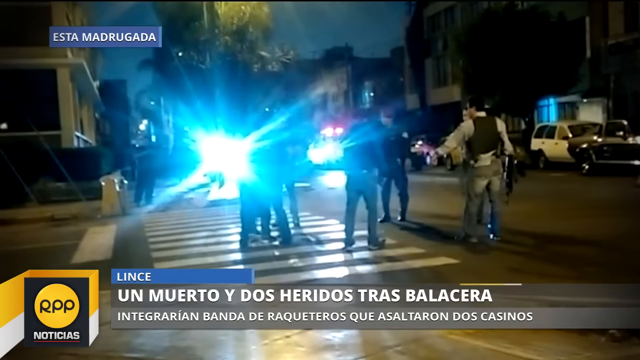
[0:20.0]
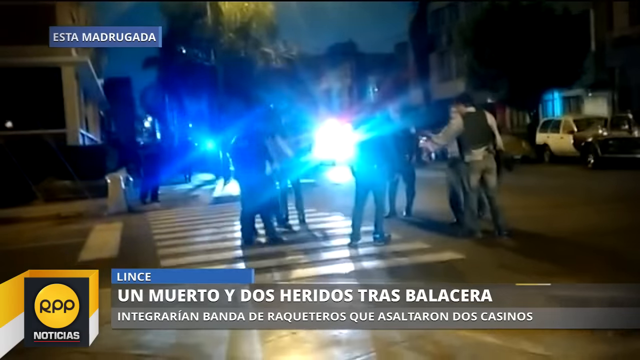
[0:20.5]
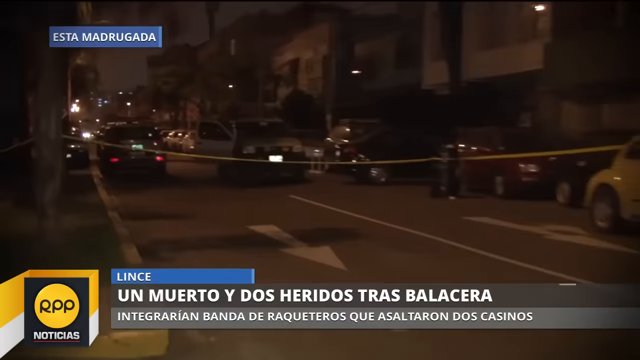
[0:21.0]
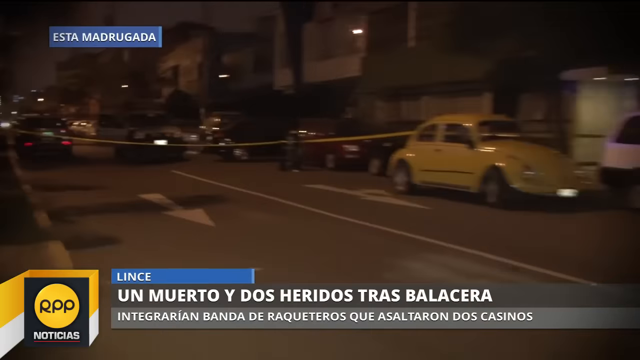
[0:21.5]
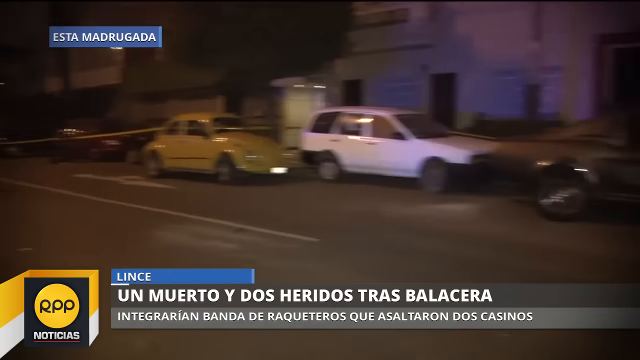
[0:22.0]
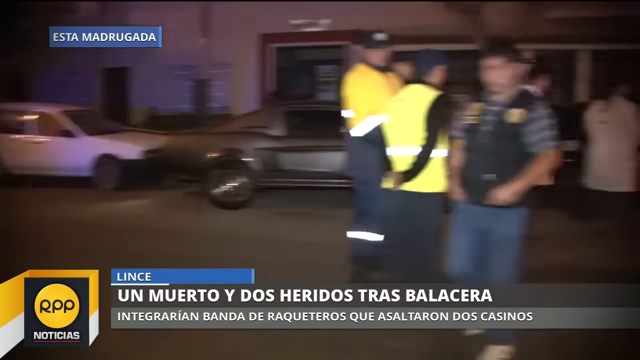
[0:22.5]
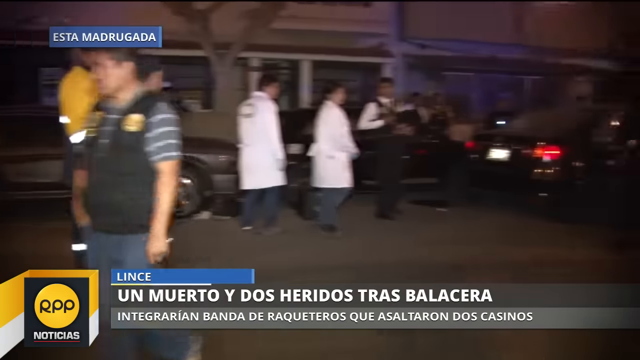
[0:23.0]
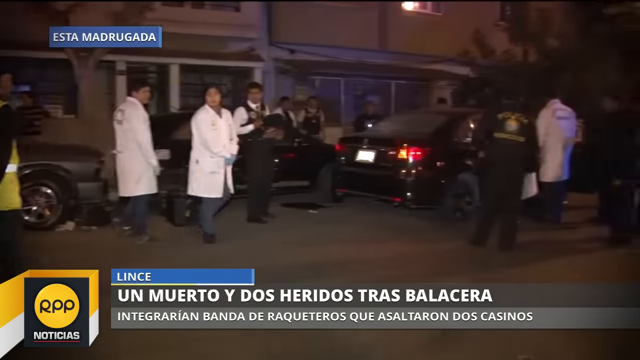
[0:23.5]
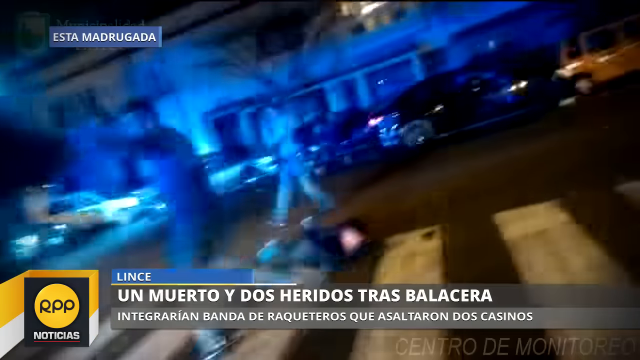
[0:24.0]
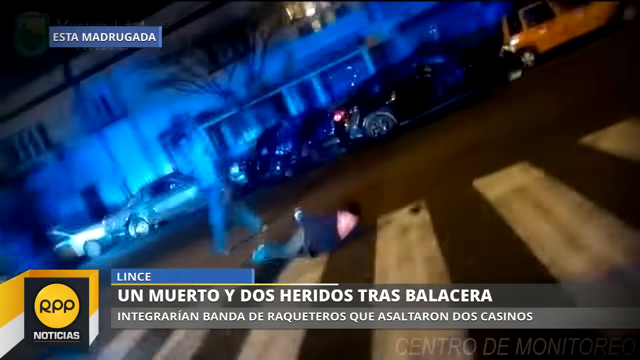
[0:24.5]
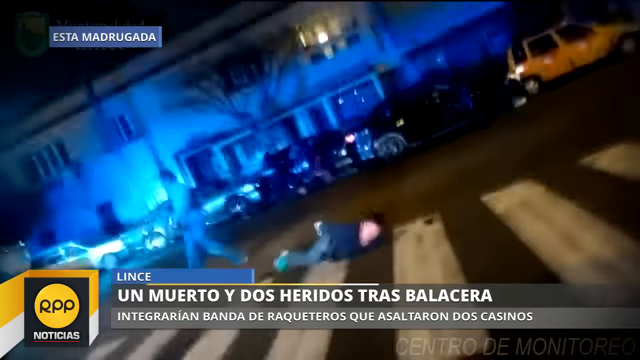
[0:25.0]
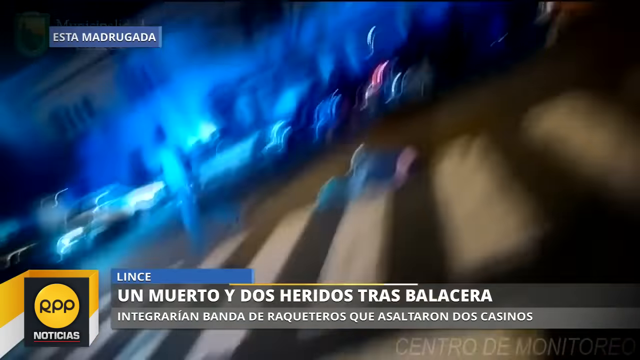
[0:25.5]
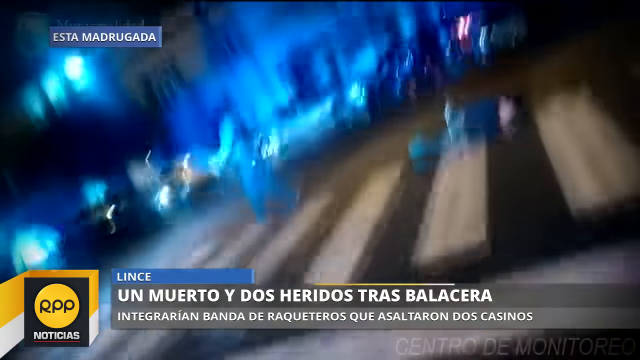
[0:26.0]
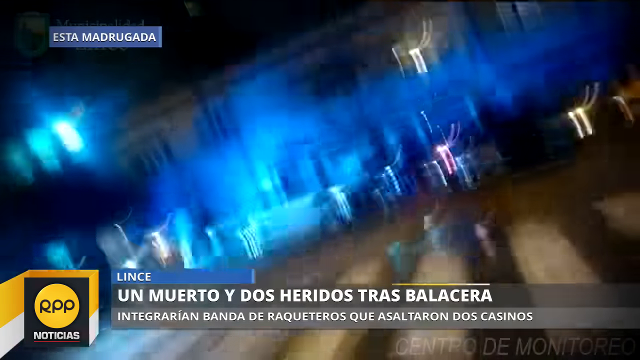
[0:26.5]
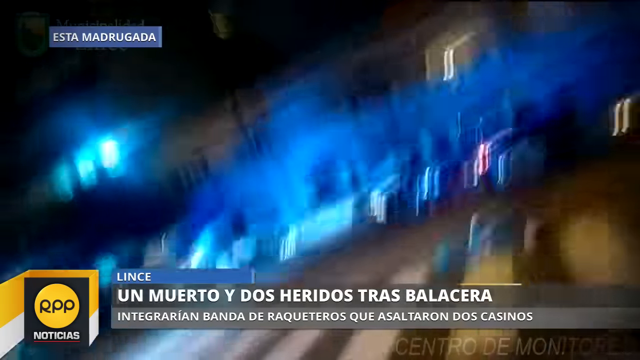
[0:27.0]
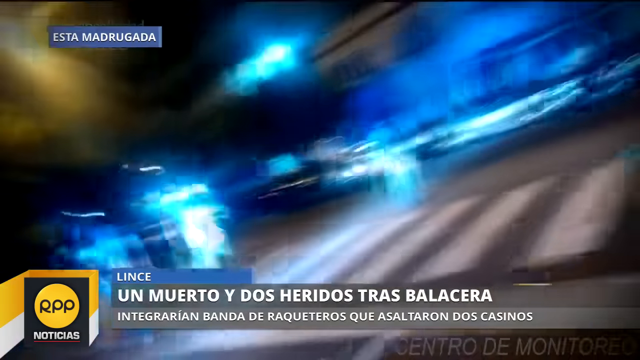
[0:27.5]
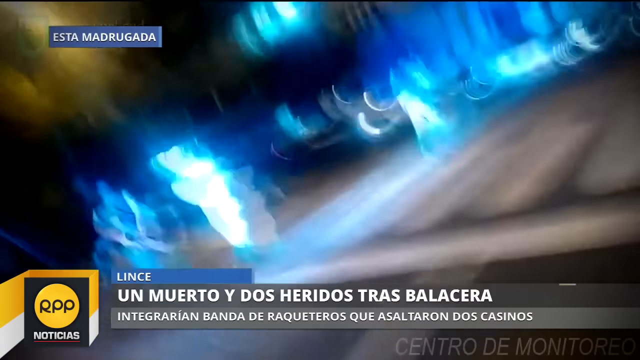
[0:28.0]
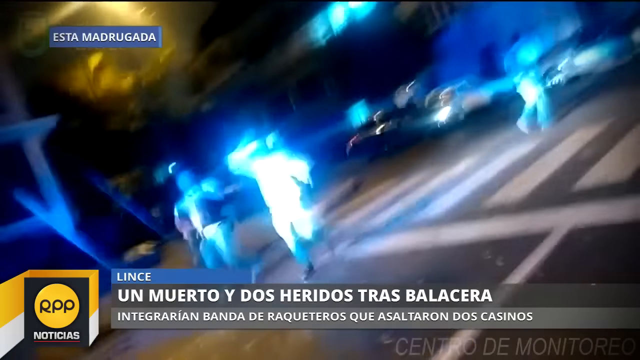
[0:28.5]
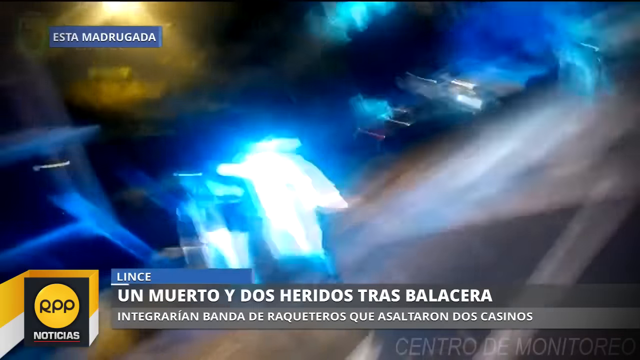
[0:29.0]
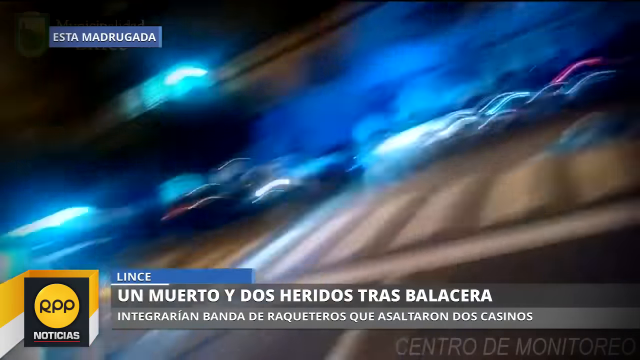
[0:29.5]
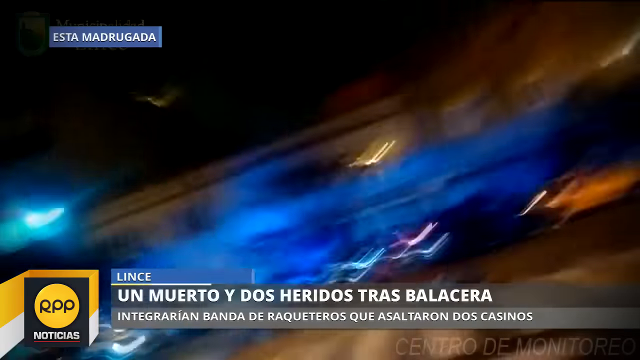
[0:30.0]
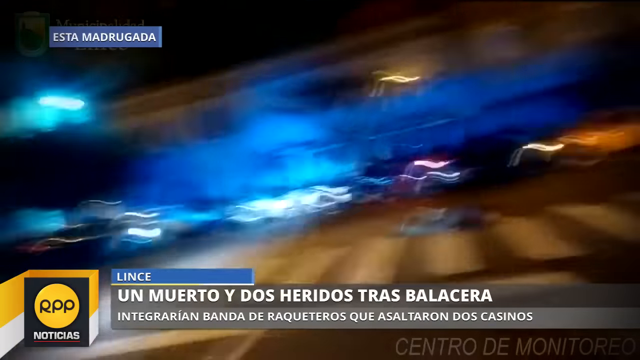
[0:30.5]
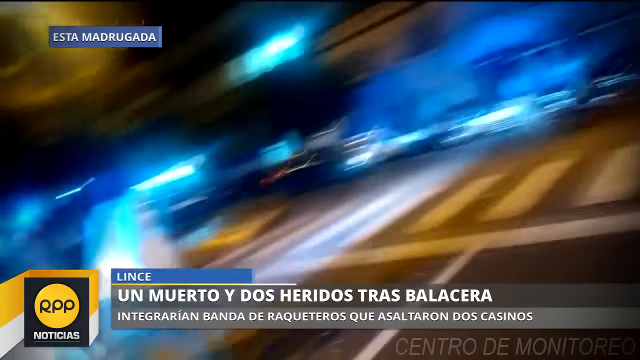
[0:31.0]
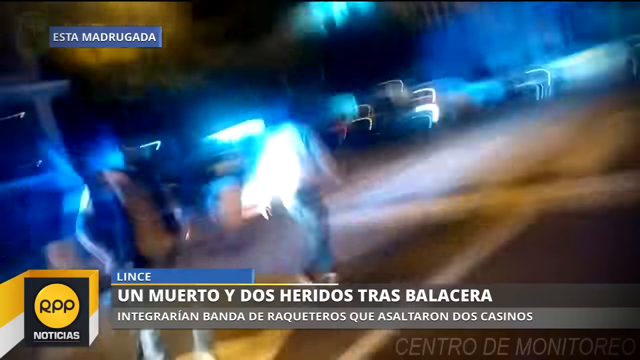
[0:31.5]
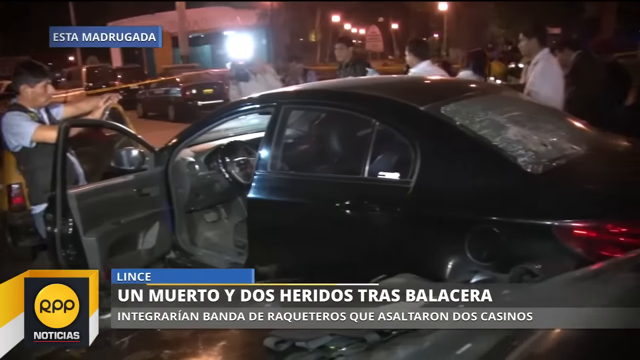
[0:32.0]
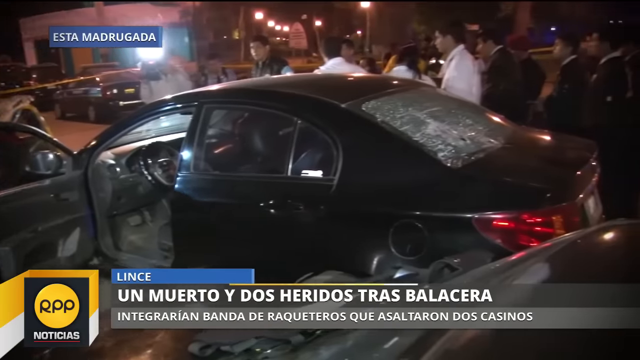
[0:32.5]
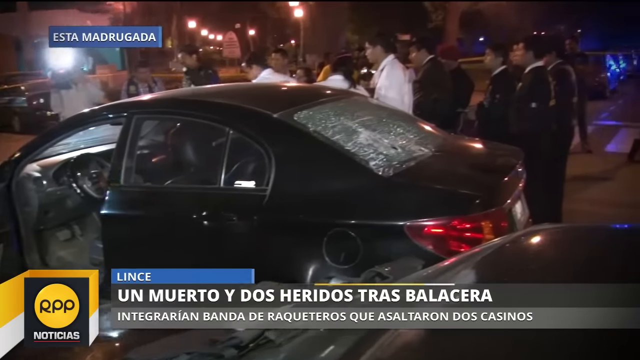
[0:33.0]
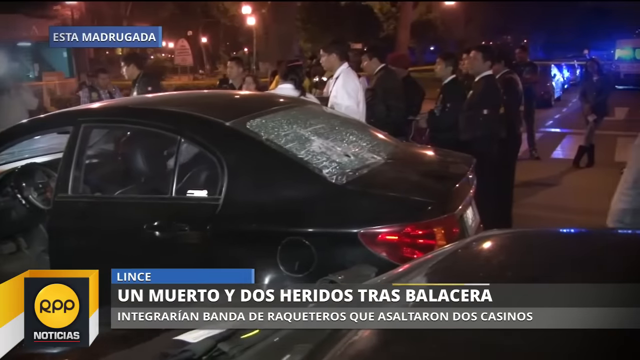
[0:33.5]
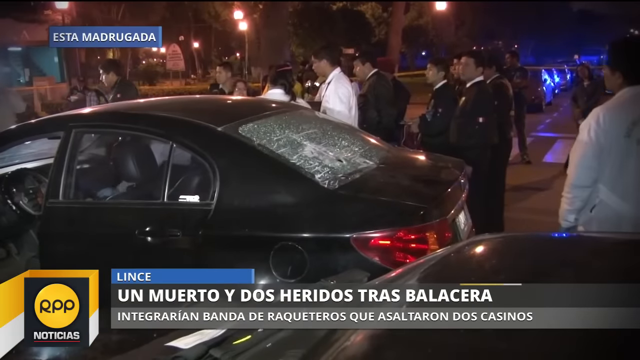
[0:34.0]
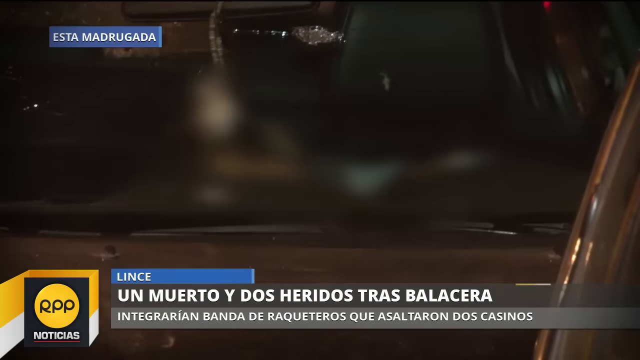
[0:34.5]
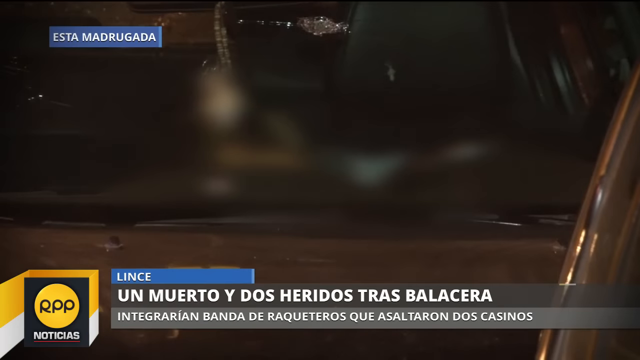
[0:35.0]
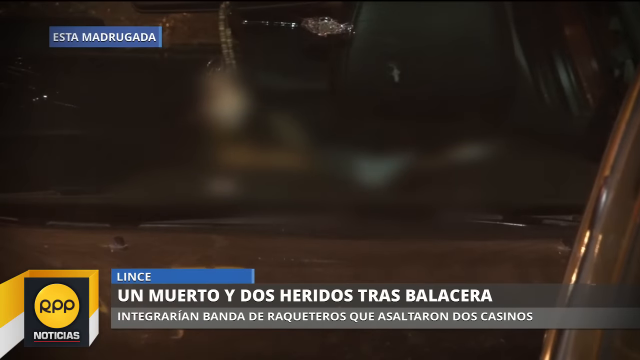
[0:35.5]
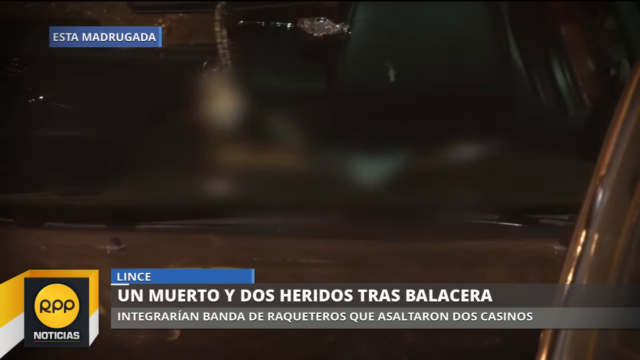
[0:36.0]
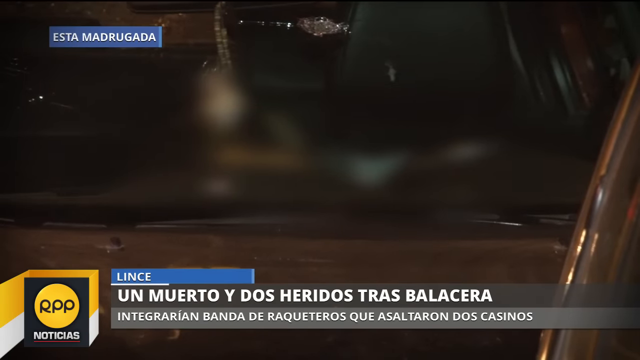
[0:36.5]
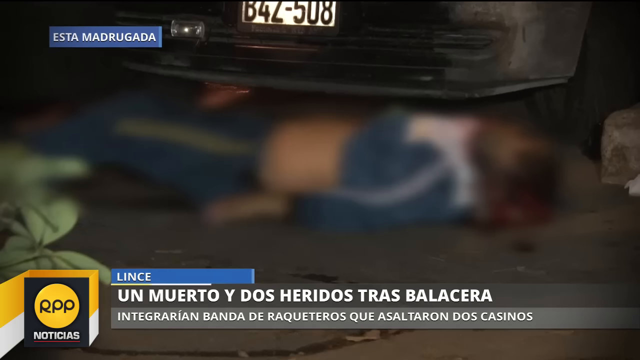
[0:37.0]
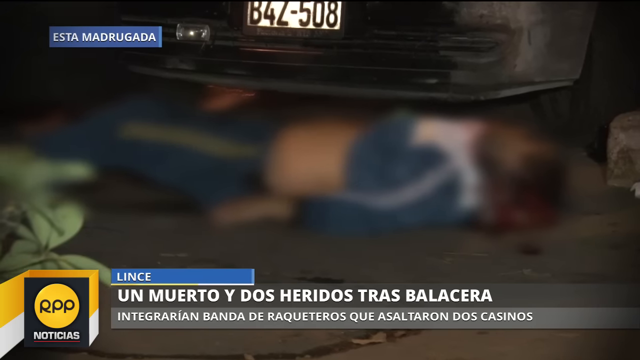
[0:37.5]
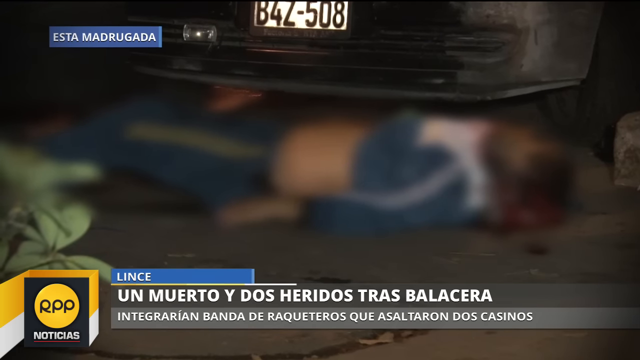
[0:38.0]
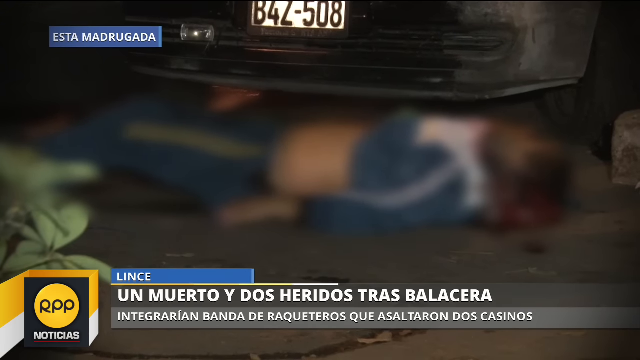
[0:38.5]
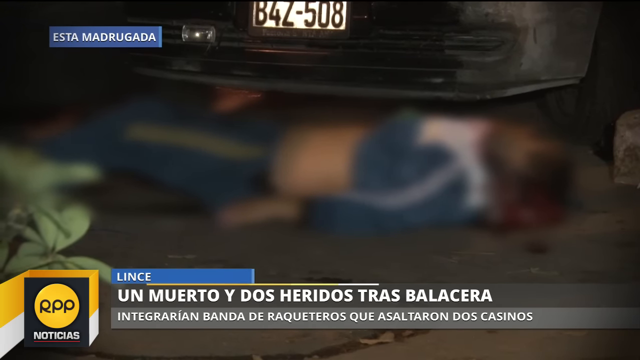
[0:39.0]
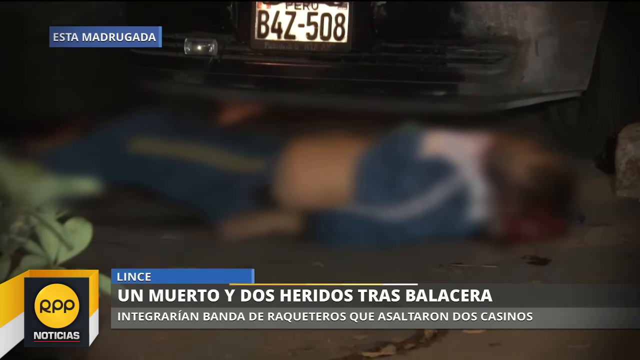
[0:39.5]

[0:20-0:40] A series of outdoor shots show a nighttime urban environment, with police and other officials around sirens next to a number of cars beside urban buildings; they are standing at the center of a crosswalk. The video cuts to a long, panning side shot that moves from one side of the street, with a number of vehicles in the background, over to police wearing vests, badges and hazard vests, along with lab technicians in white coats, standing around a couple of other vehicles. It then shows the earlier shot of an individual lying in handcuffs on the crosswalk in the center of the street, with white lights on the left, police walking around them and vehicles in the background. Officials wave people off the center of the street. A side-angle shot shows a vehicle with the driver's side door open and the rear view window shot out with busted glass, with officials standing around it, some in white lab coats. A blurred-out view of the back passenger seat follows, and then an individual lying on the ground, blurred out and apparently shot.